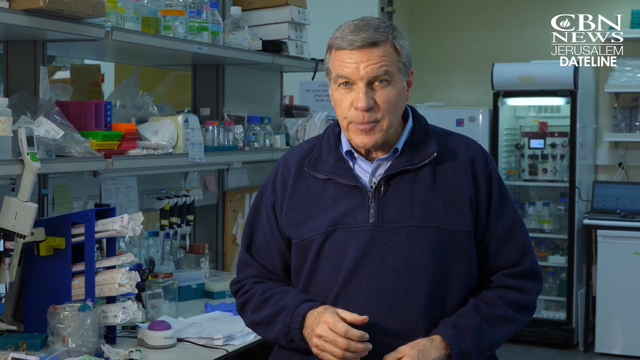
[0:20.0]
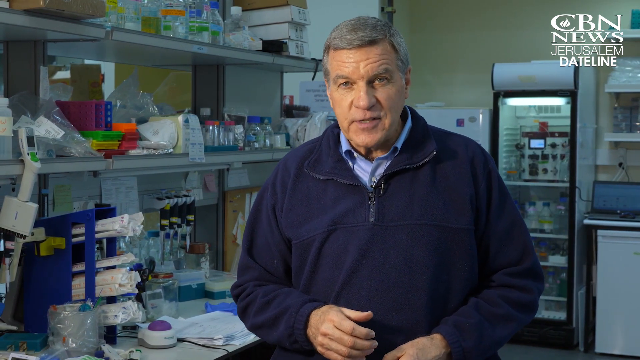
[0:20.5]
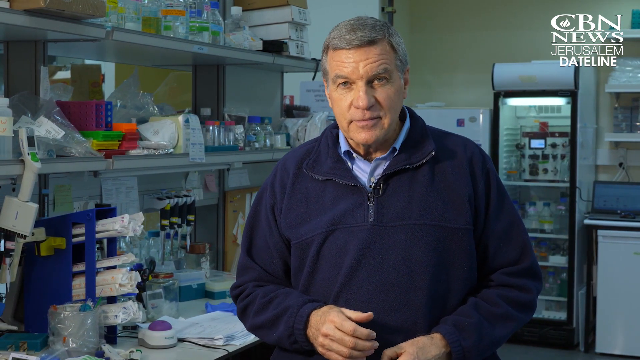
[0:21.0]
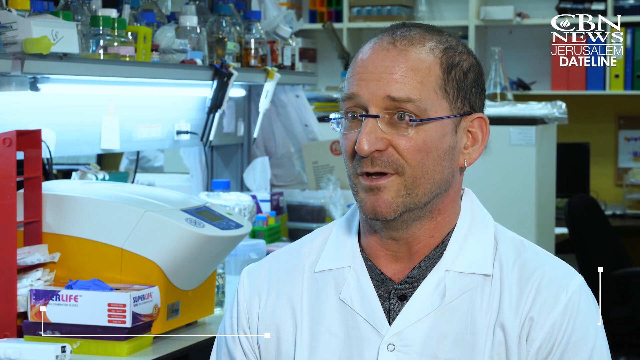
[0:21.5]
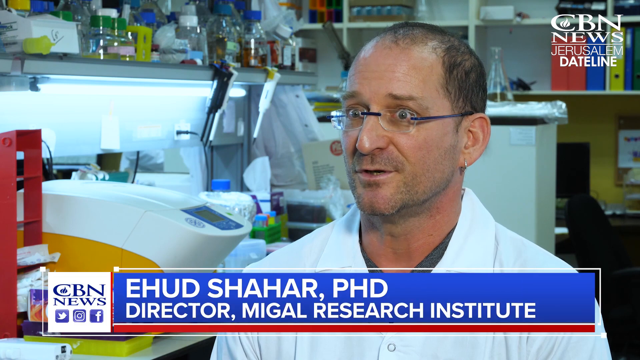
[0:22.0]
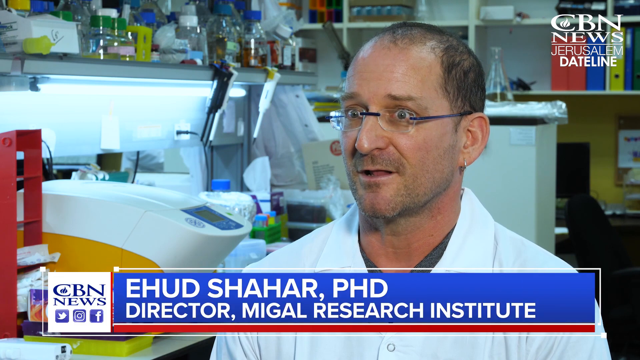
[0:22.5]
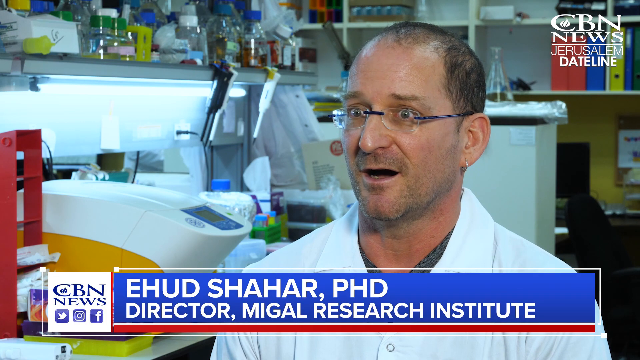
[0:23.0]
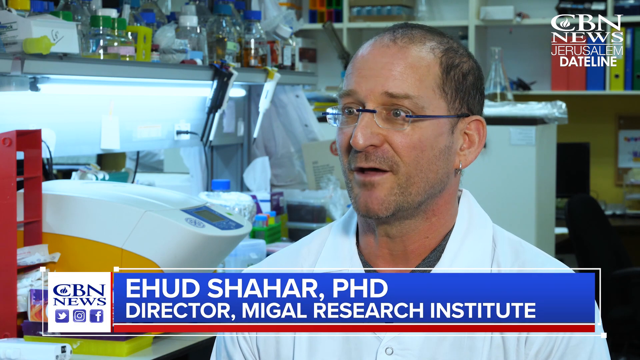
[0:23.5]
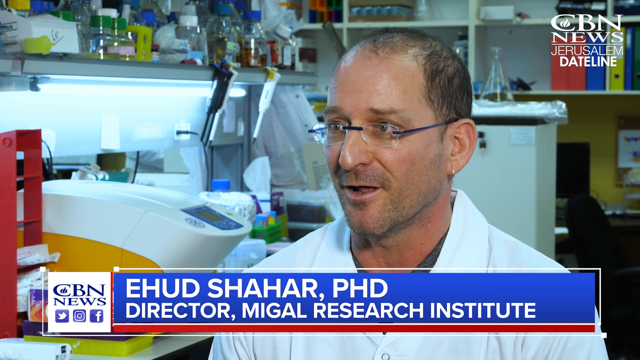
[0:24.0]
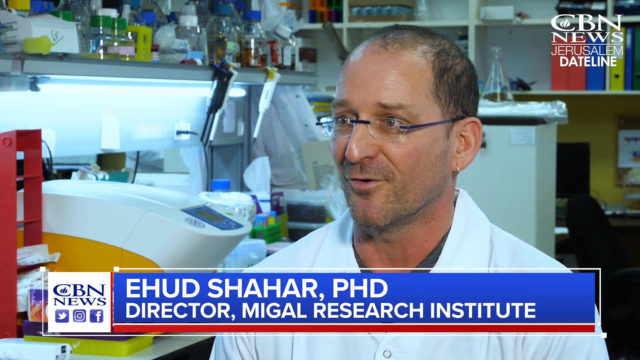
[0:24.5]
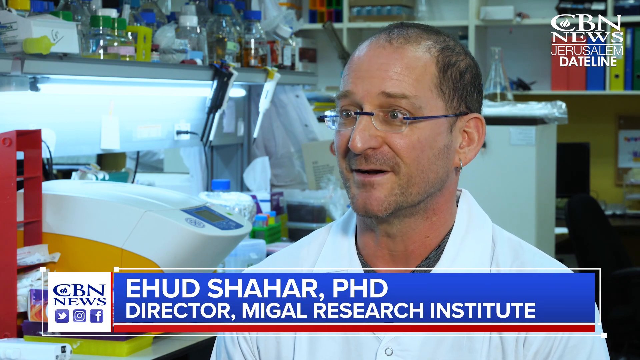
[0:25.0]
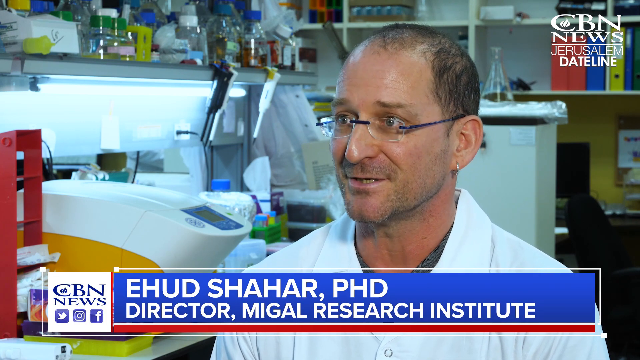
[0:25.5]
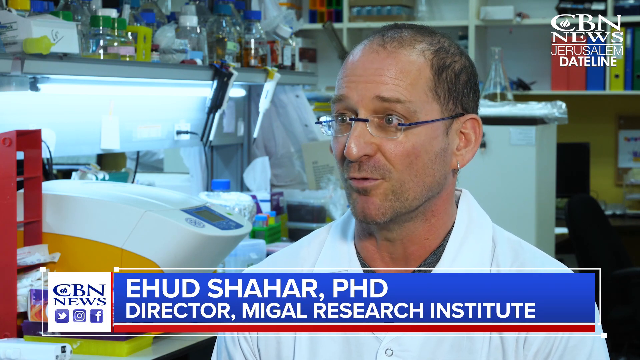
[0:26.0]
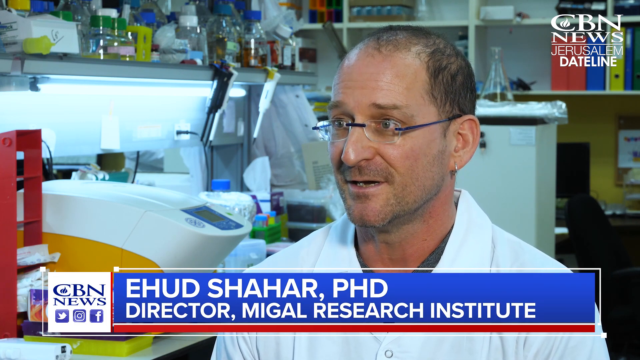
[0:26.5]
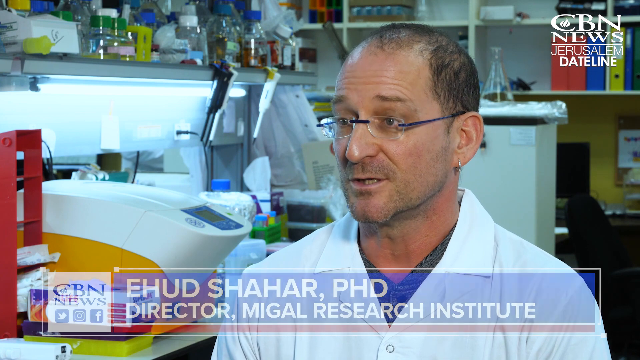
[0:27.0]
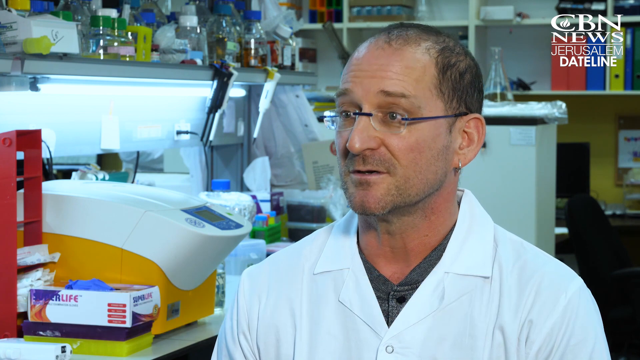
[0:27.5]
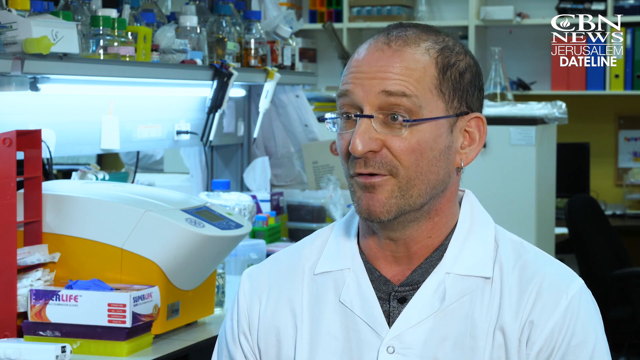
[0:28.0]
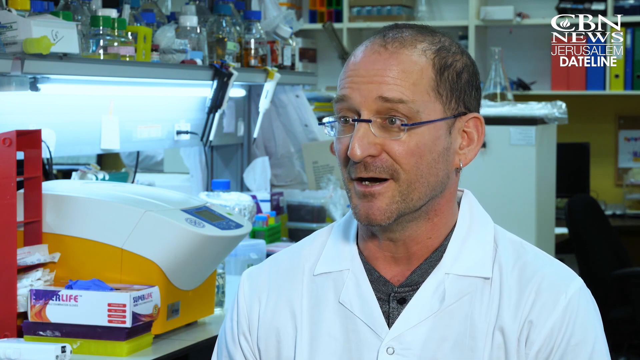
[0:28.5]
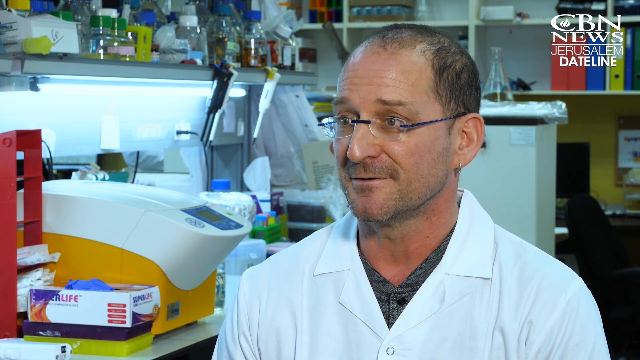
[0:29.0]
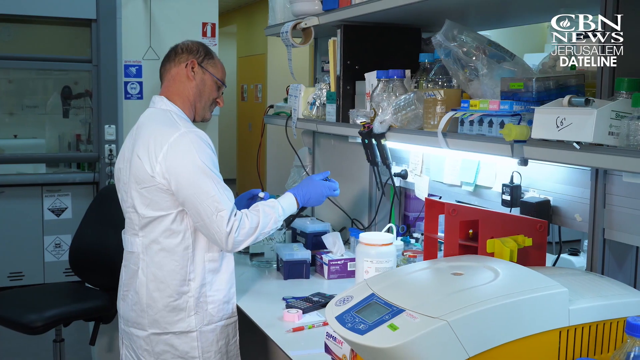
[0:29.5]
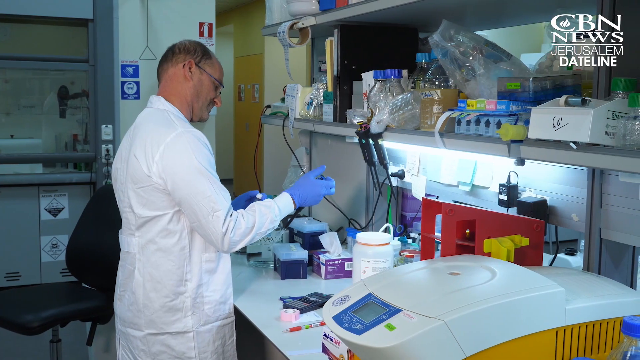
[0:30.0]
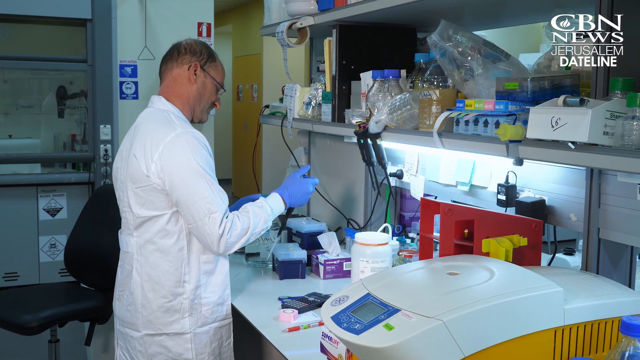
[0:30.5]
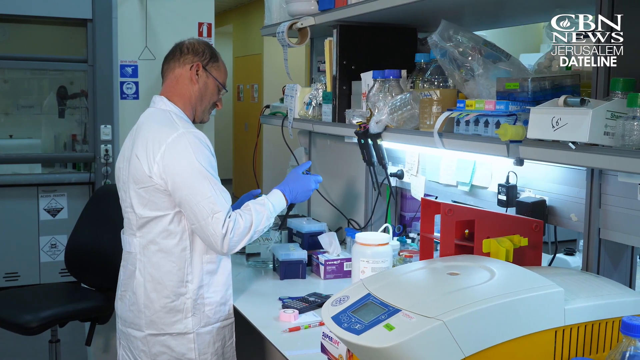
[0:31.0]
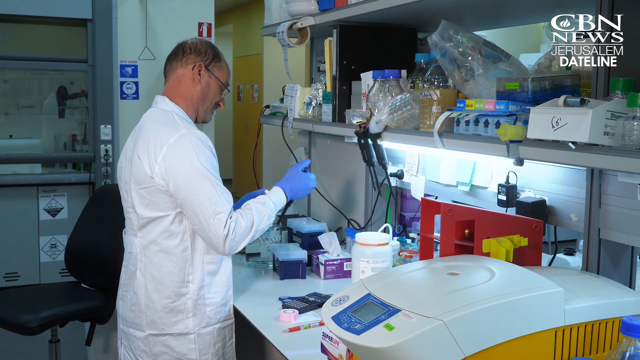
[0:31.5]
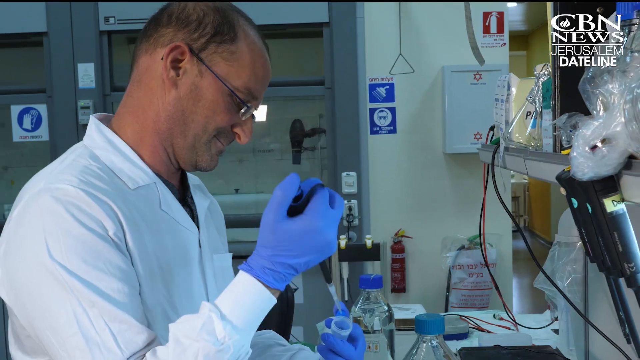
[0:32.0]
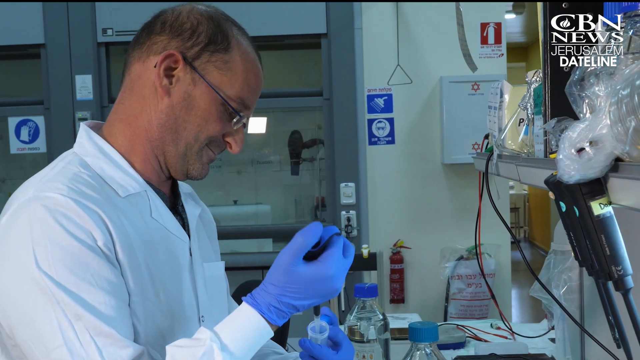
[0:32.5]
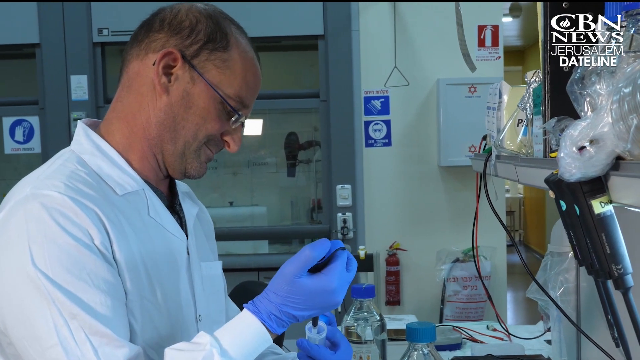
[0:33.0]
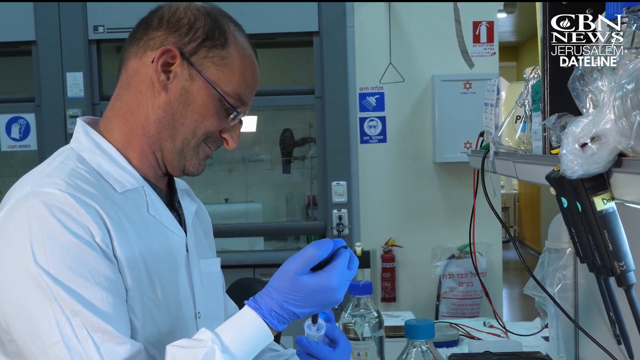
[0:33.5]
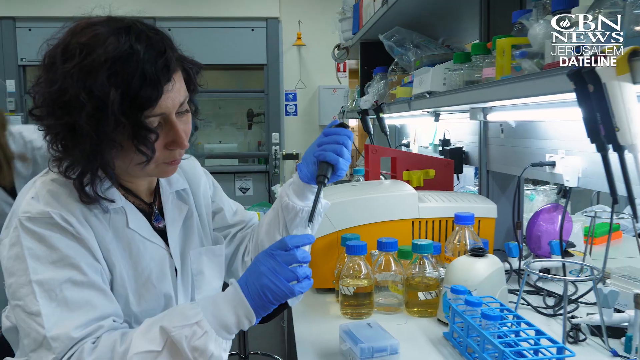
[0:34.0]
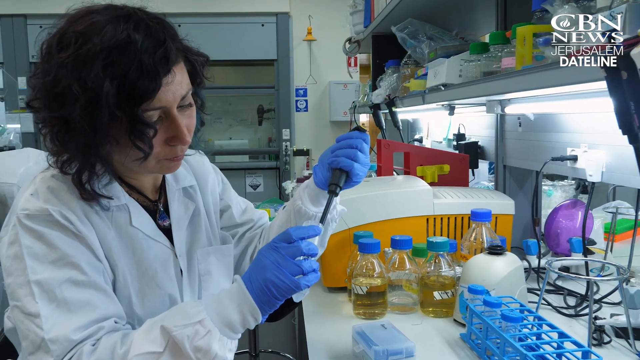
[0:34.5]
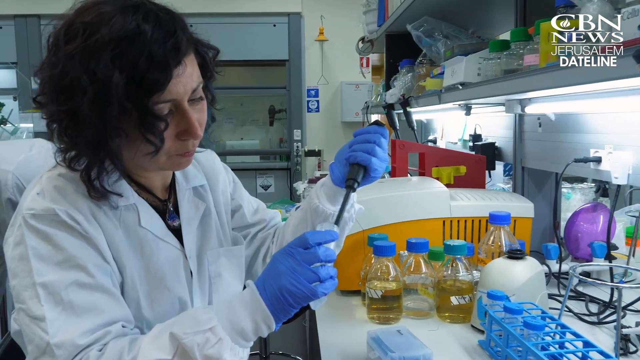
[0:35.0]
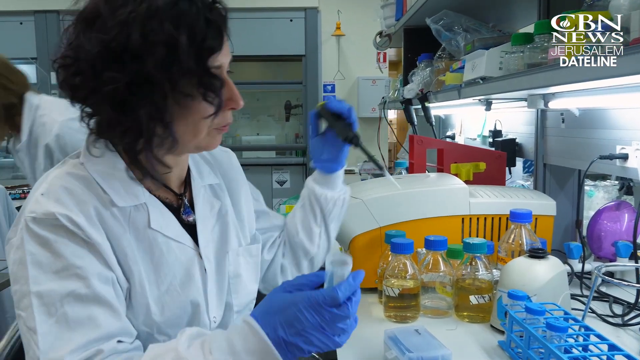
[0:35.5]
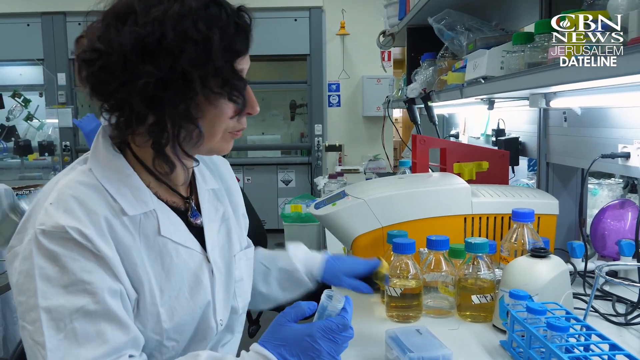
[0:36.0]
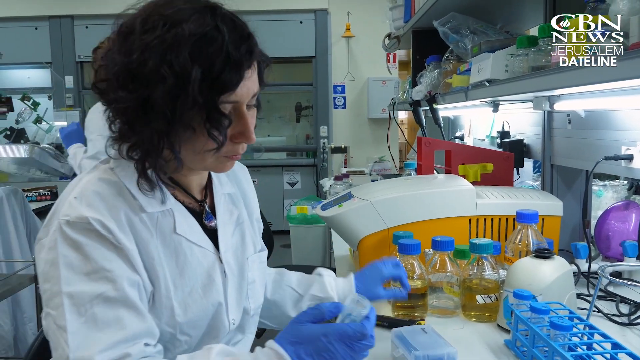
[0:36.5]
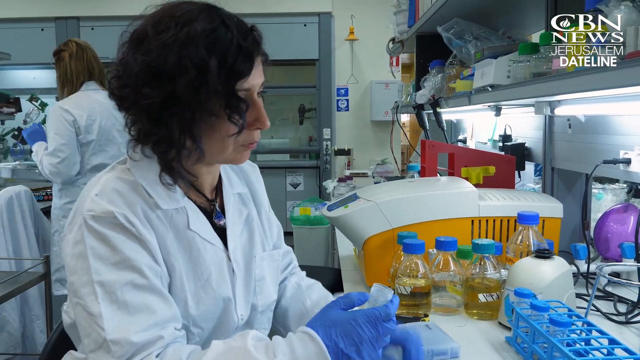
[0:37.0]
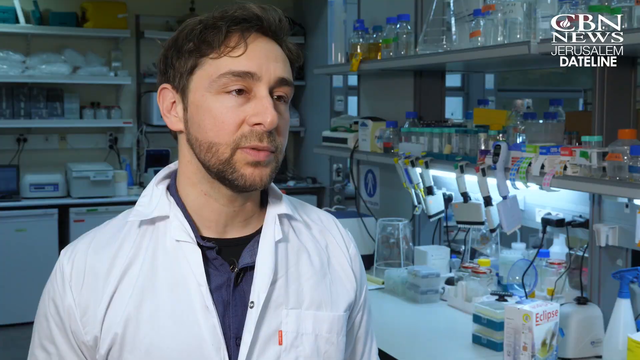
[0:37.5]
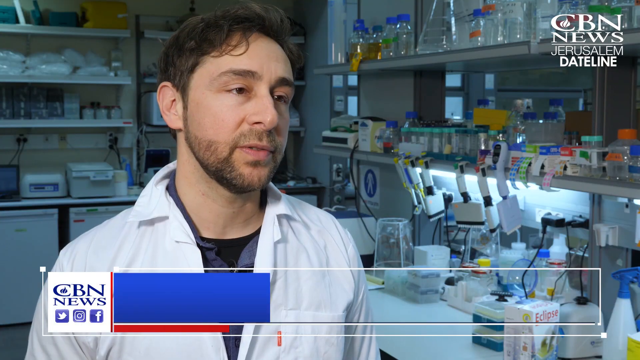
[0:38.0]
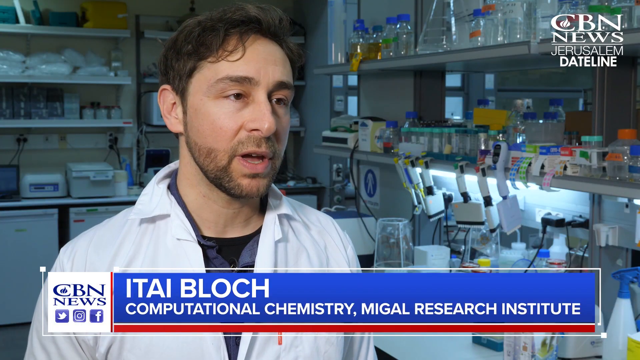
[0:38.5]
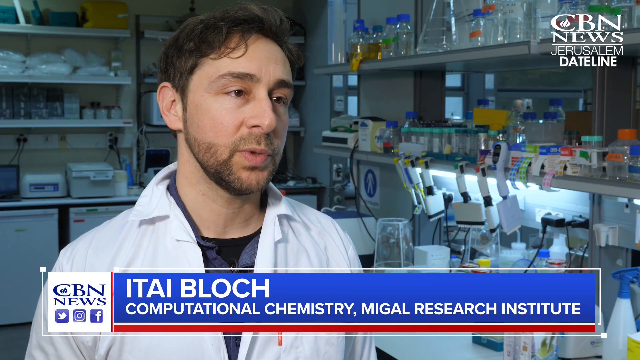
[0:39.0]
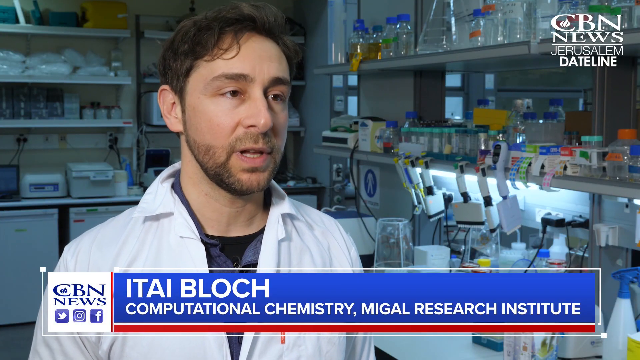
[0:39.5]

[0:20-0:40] Chris Mitchell talks toward the viewer in a sort of news-story fashion. At the top right, text reads "CBN News Jerusalem Dateline", apparently the name of the show. An interview follows with a different scientist from the one seen at the start. He has much shorter black hair and an earring in his left ear, a basic-looking metallic gold earring in the shape of a tiny loop. His name is Ehud Shahar, PhD, director of the Michael Research Institute. He is interviewed while looking off to the left at the person interviewing him. Footage then shows him and another woman working.